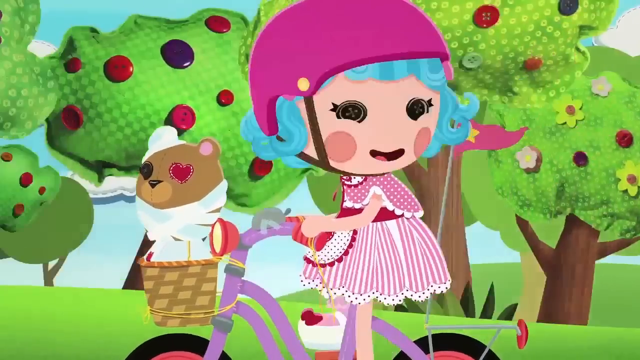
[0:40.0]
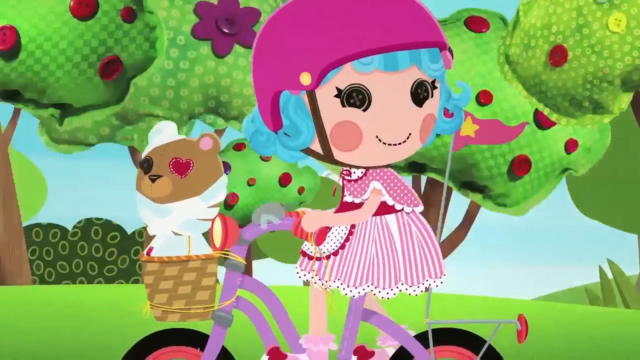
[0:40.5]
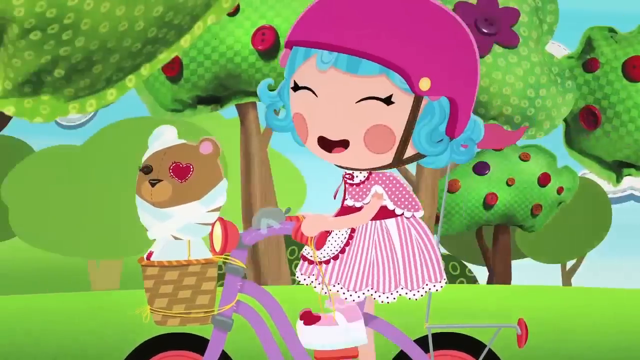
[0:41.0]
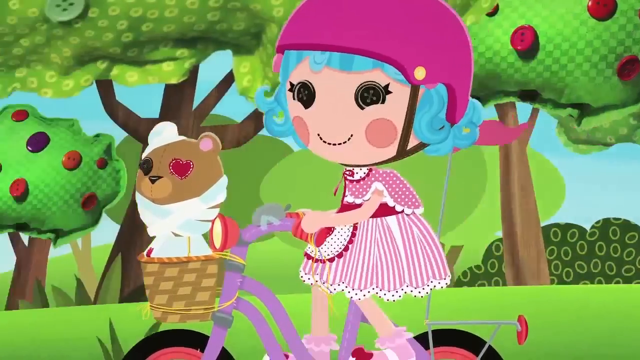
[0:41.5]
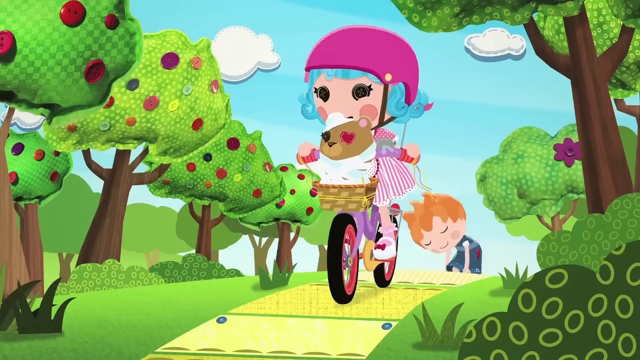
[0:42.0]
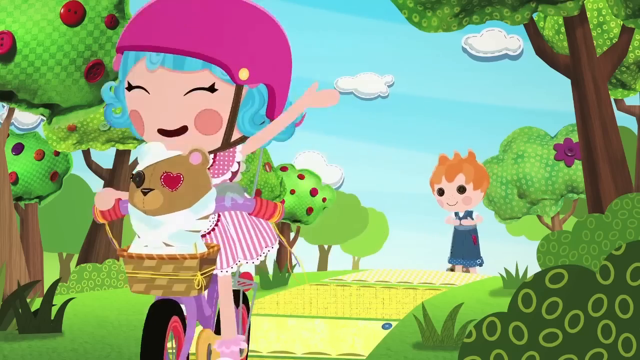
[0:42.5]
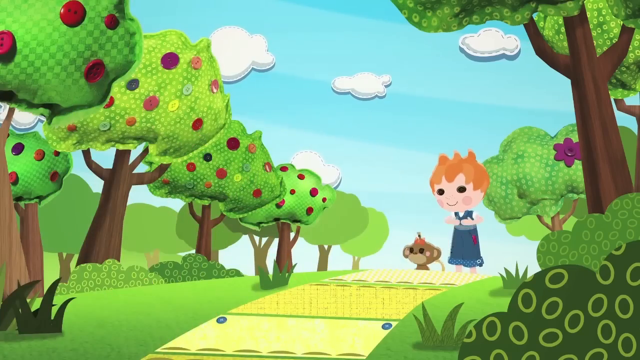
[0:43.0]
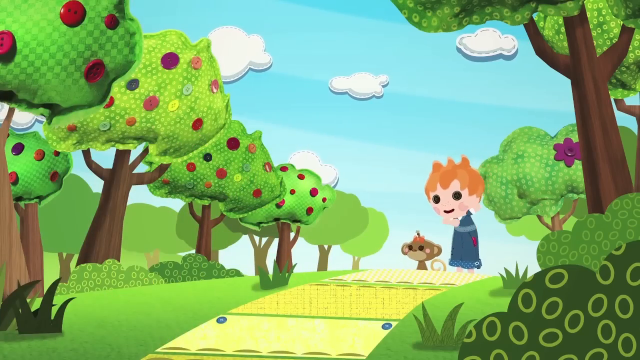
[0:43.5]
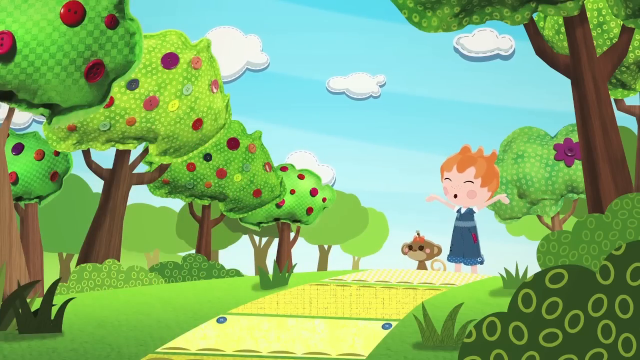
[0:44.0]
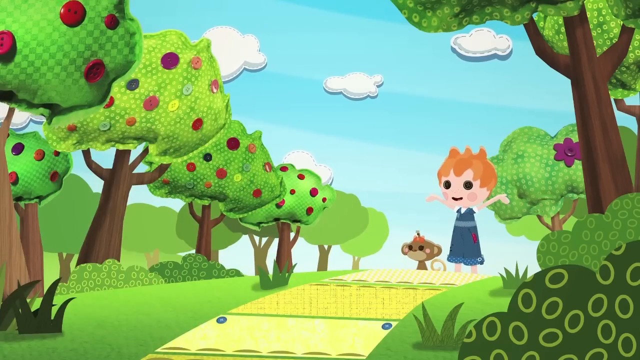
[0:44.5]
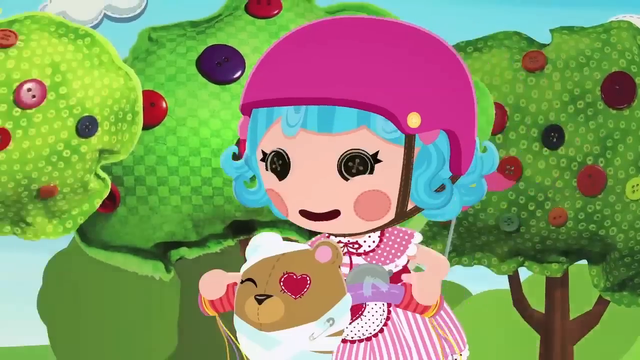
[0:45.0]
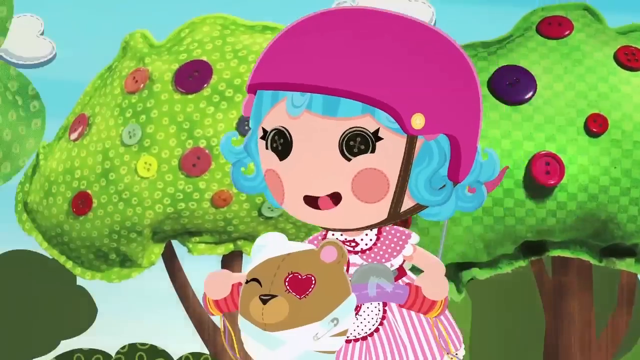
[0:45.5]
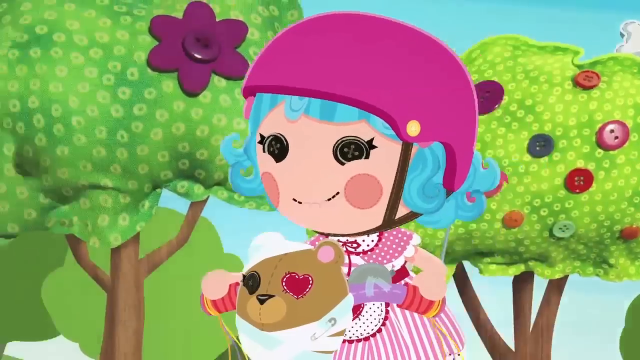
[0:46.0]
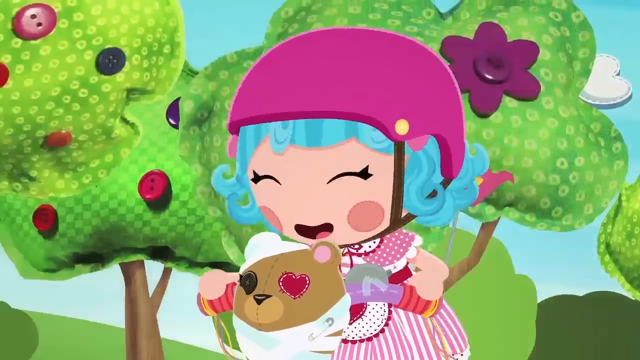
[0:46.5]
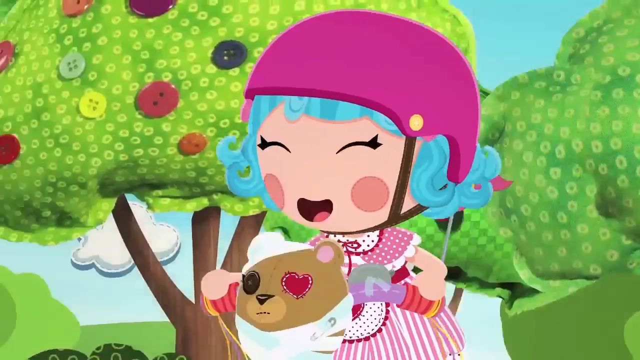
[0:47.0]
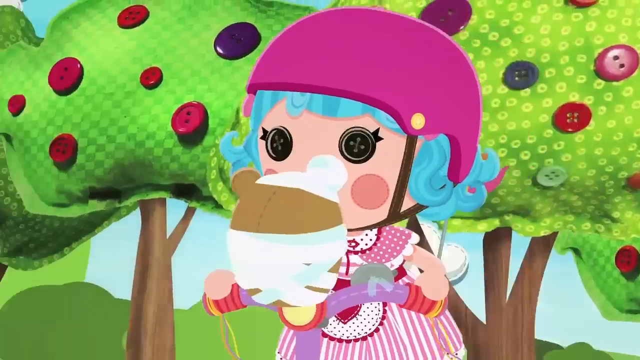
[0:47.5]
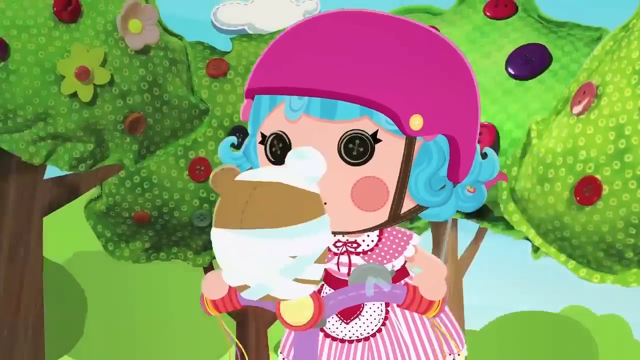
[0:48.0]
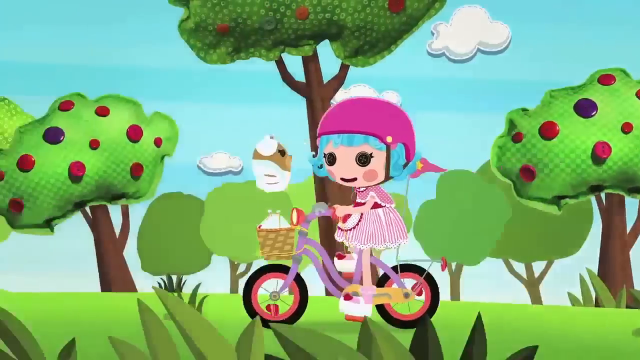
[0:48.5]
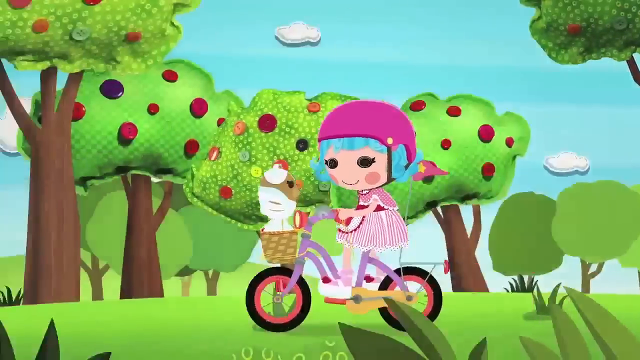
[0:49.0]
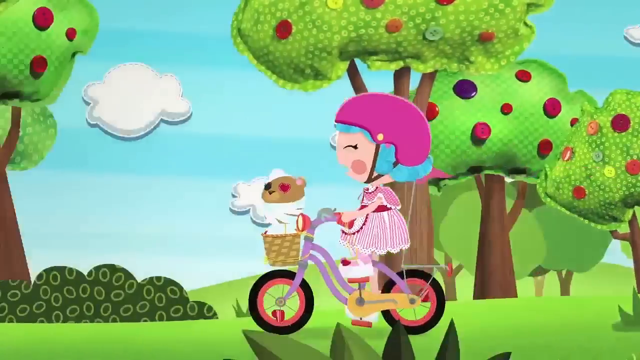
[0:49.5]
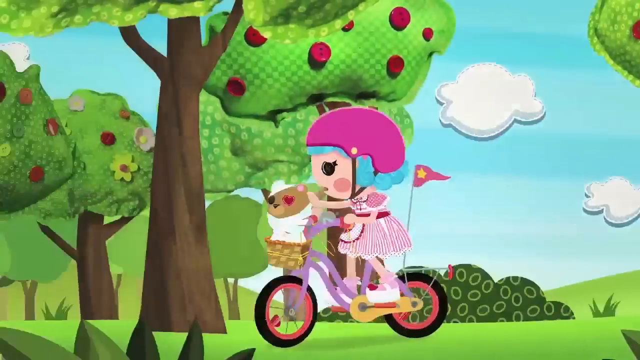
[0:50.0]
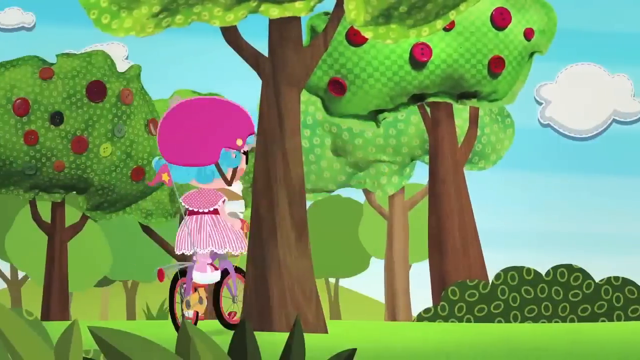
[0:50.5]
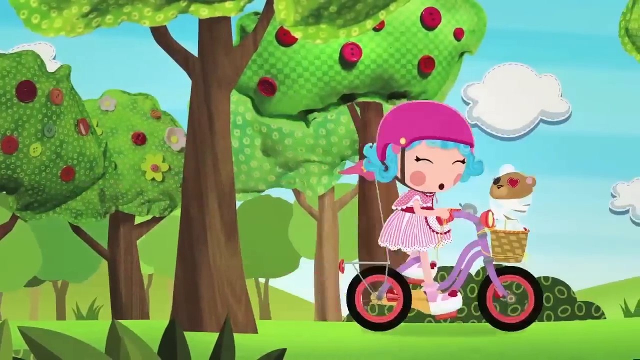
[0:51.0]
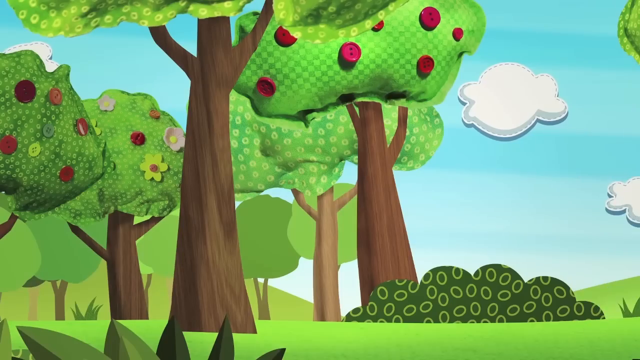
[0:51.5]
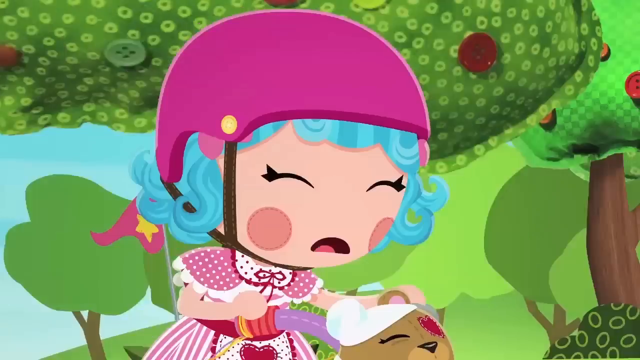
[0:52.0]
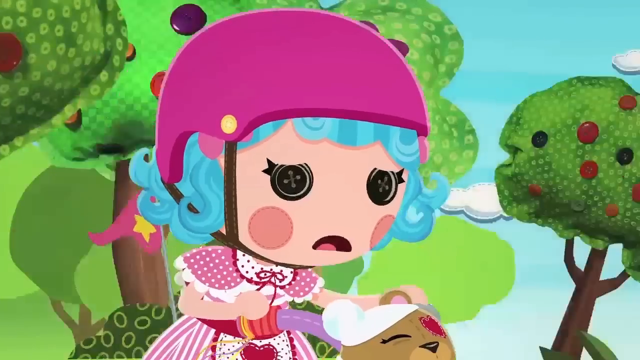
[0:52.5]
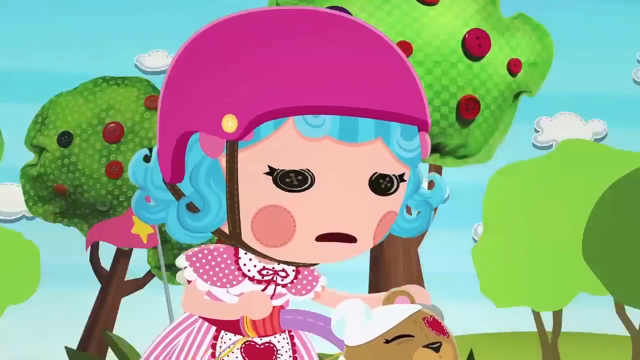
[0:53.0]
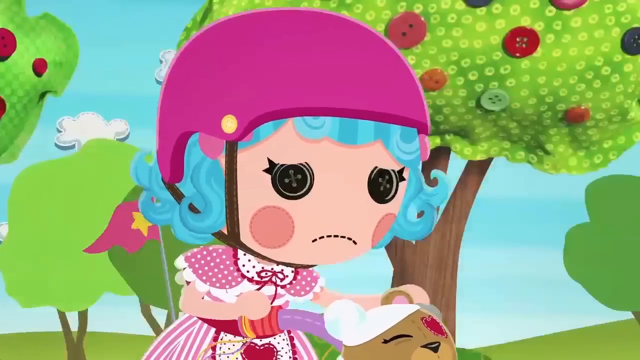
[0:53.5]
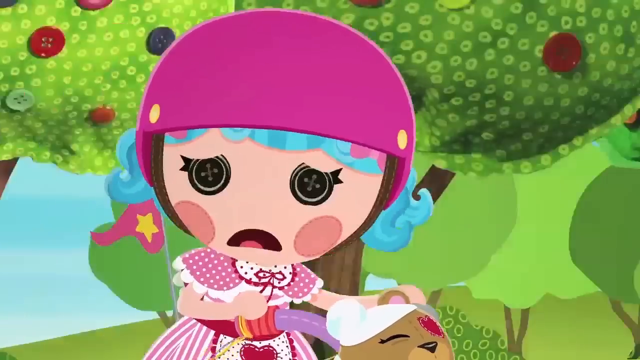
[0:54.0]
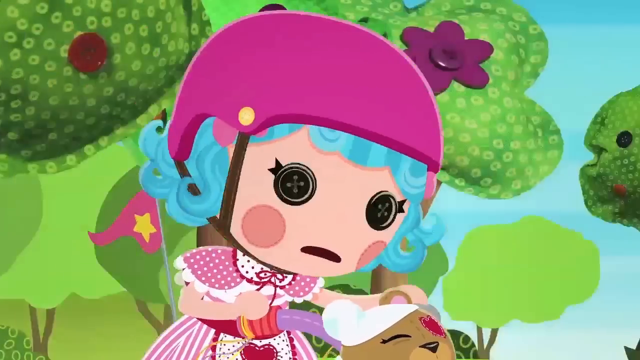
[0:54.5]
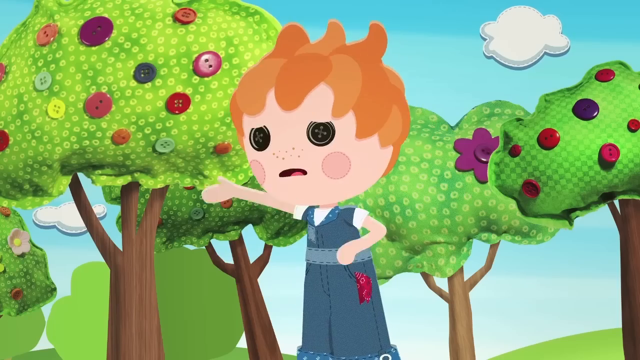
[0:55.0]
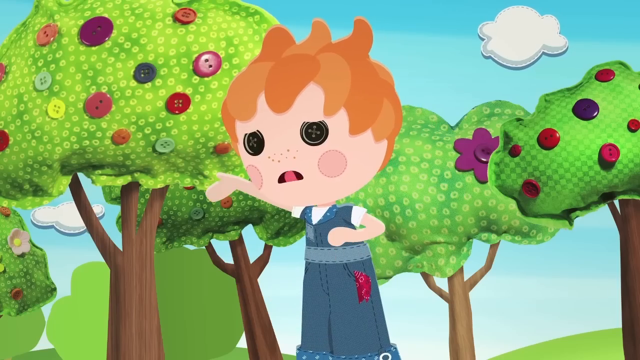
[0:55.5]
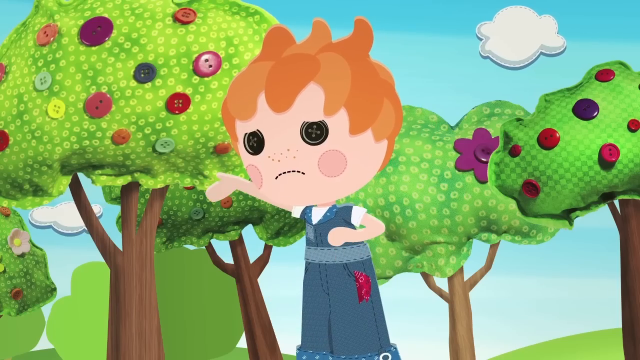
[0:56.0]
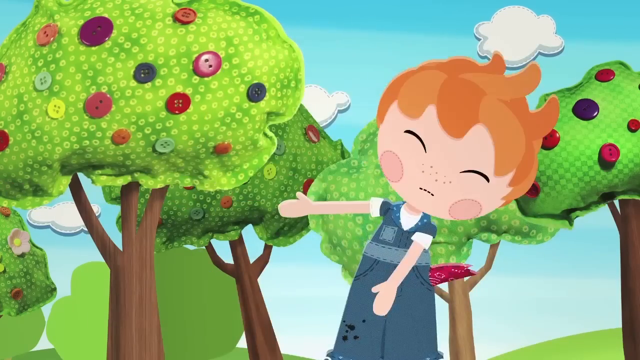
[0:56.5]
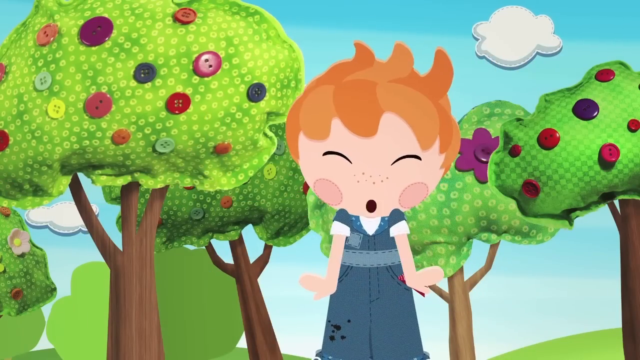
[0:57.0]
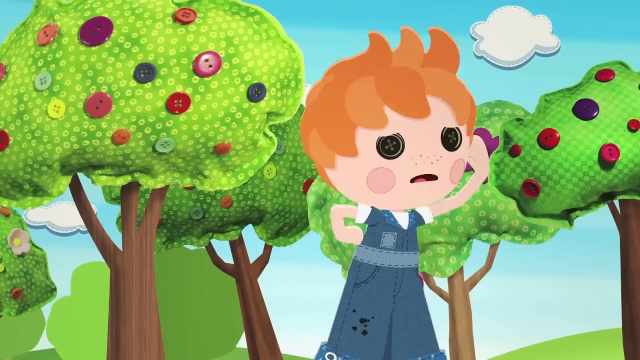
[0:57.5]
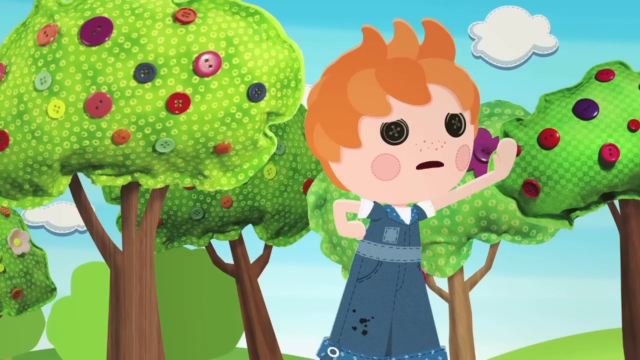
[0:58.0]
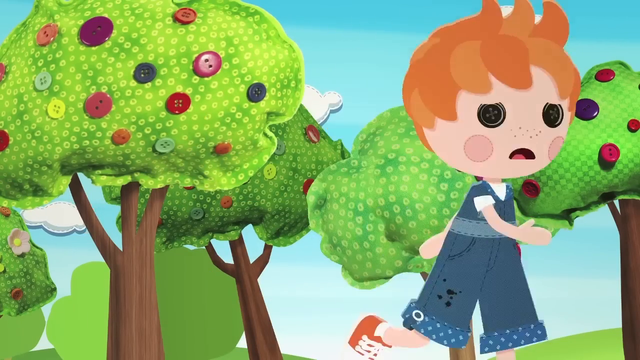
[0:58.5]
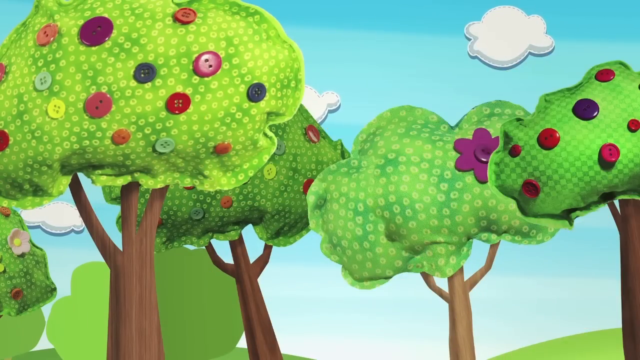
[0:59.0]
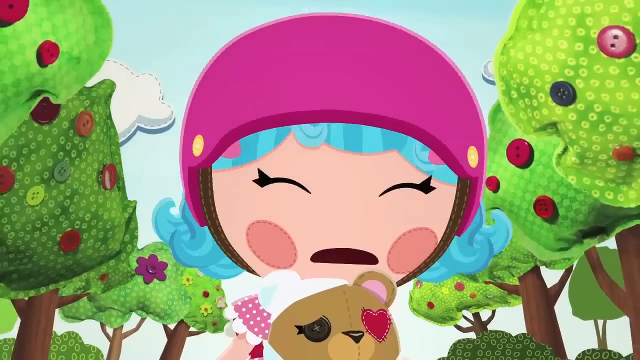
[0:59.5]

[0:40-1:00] The 2D, kid-friendly animated show of dolls with buttons for eyes continues. The girl doll rides away on her bike from the boy, who has just fallen on his face while following her. She seems very happy. She has blue hair, and a teddy bear is in the basket at the front of her bike. As she rides away, she waves goodbye to the boy, who says goodbye, with his monkey. She rides off happily with her teddy bear, but then suddenly turns around, making a U-turn by a tree, and becomes very distressed and sad. Riding back toward the boy, she passes him, and the boy is very confused about why she is sad.